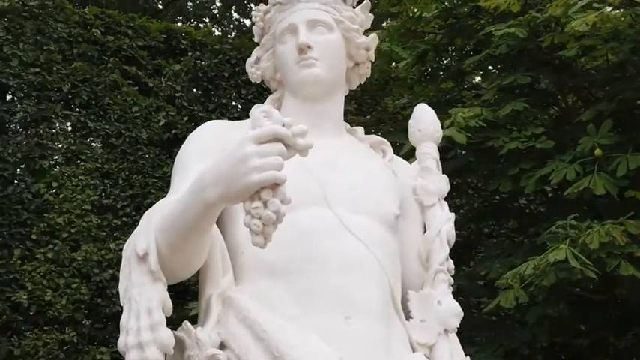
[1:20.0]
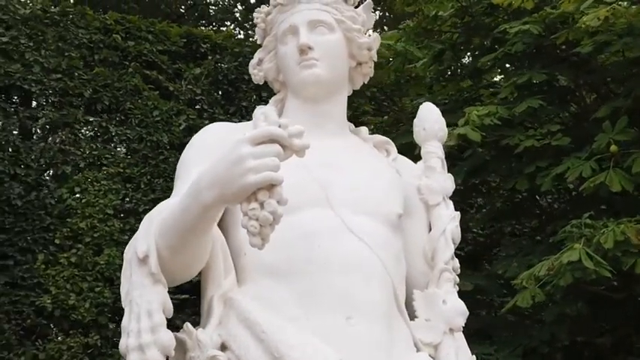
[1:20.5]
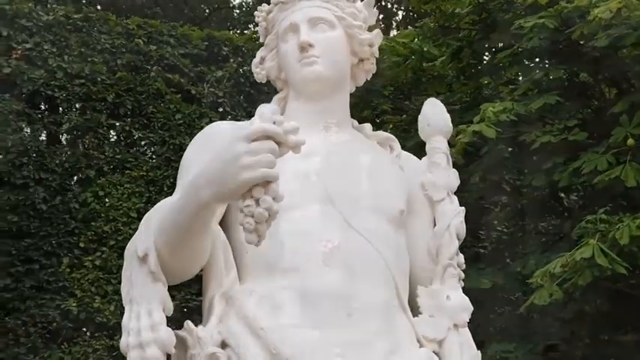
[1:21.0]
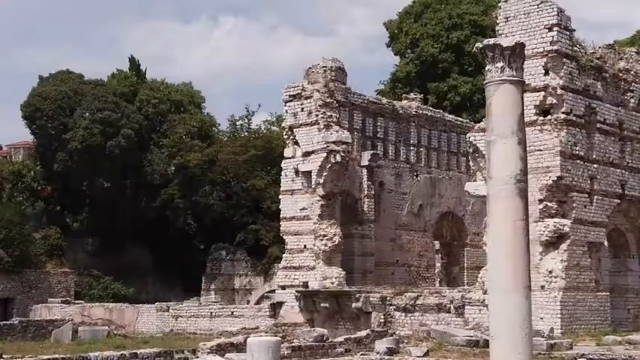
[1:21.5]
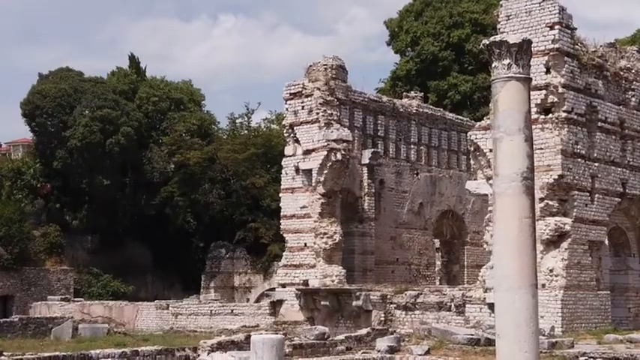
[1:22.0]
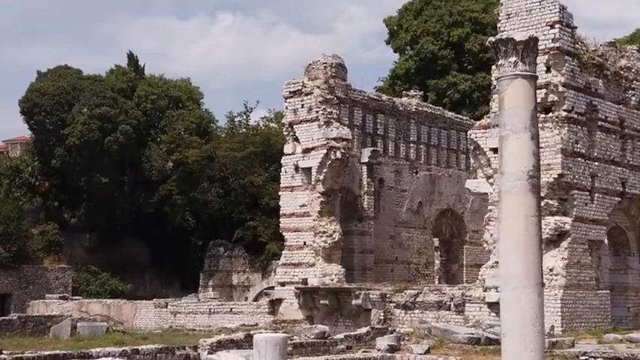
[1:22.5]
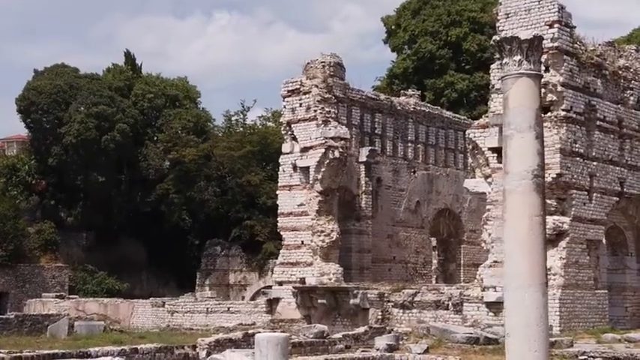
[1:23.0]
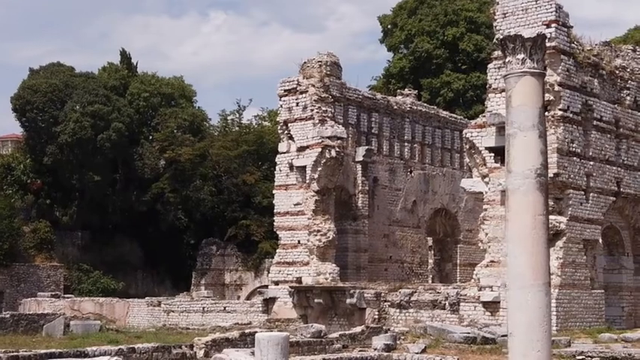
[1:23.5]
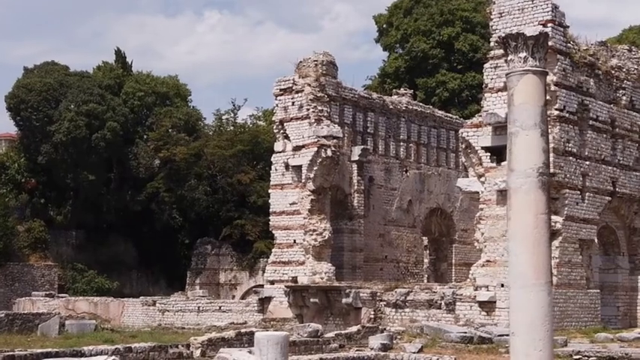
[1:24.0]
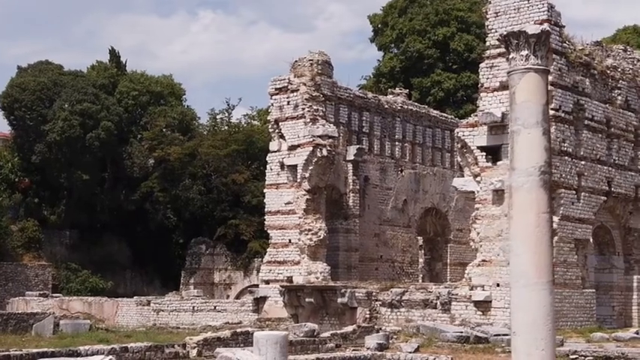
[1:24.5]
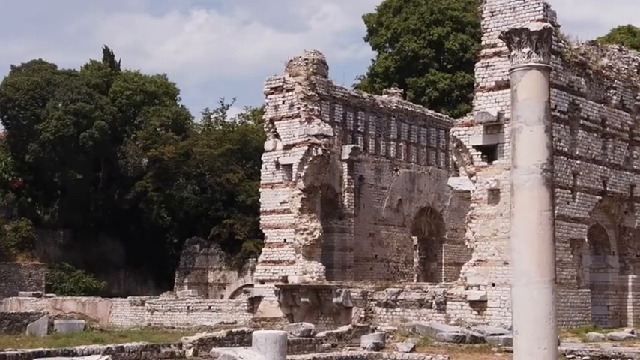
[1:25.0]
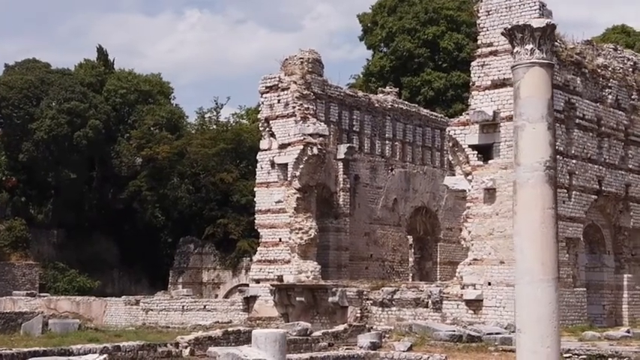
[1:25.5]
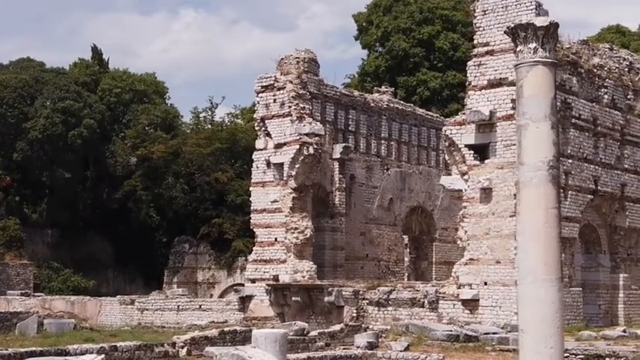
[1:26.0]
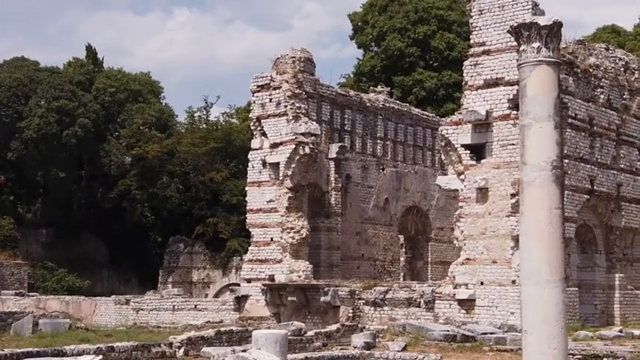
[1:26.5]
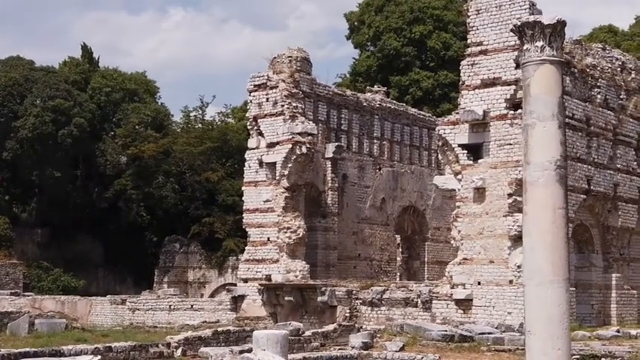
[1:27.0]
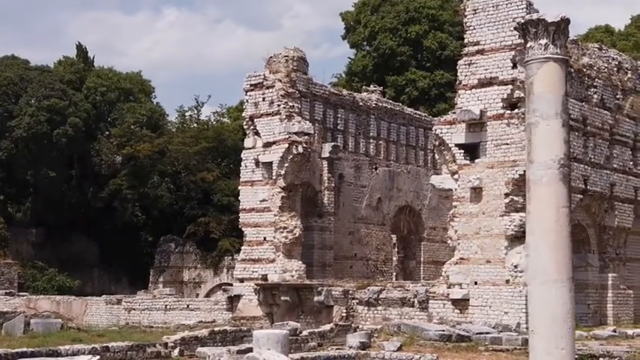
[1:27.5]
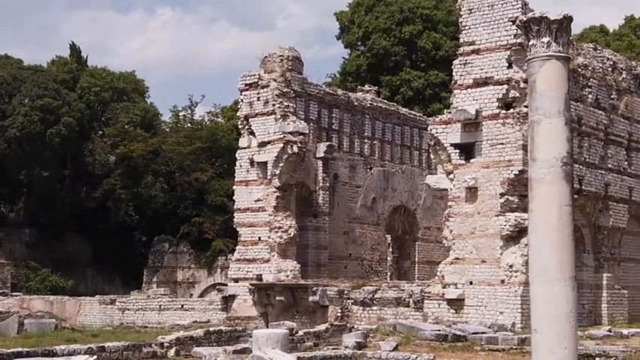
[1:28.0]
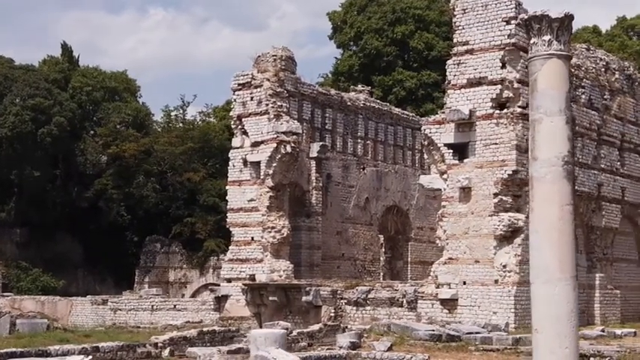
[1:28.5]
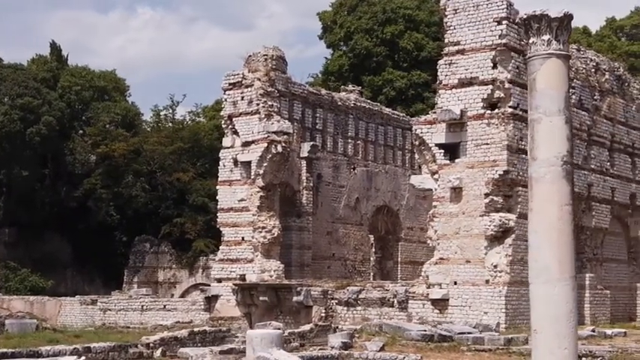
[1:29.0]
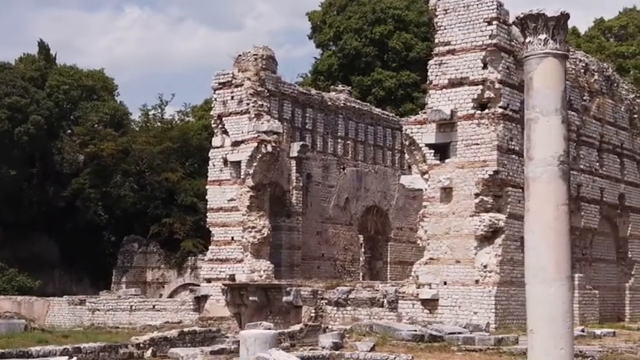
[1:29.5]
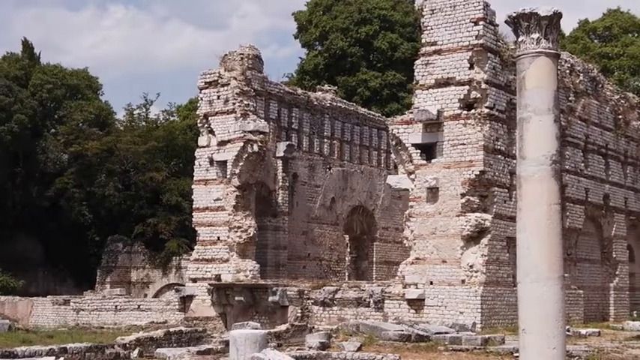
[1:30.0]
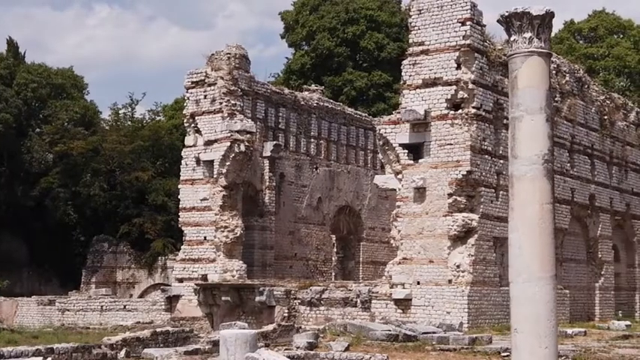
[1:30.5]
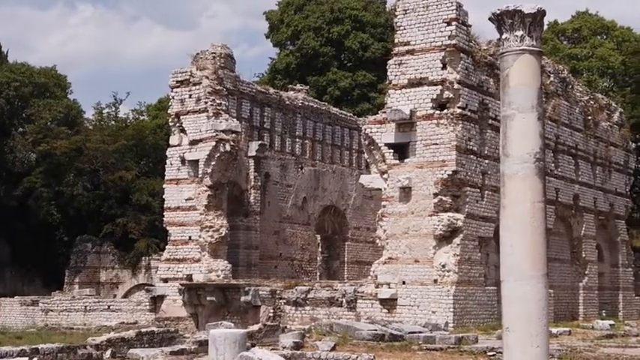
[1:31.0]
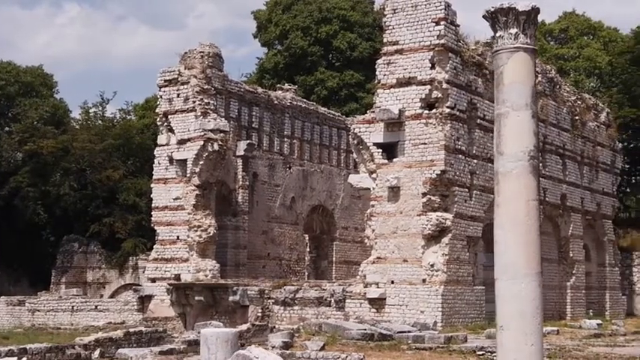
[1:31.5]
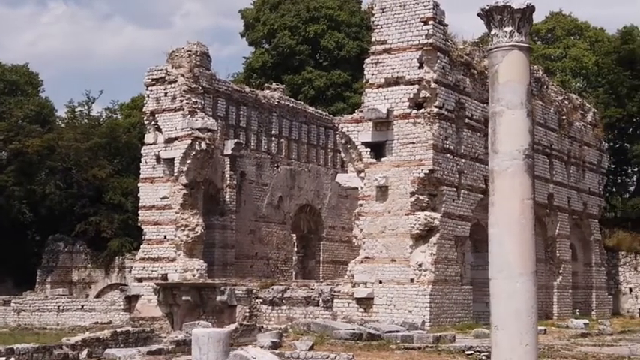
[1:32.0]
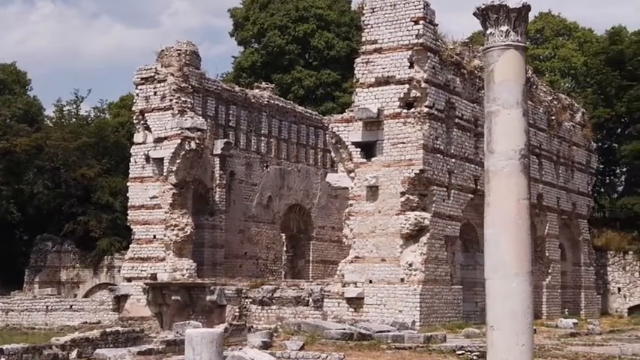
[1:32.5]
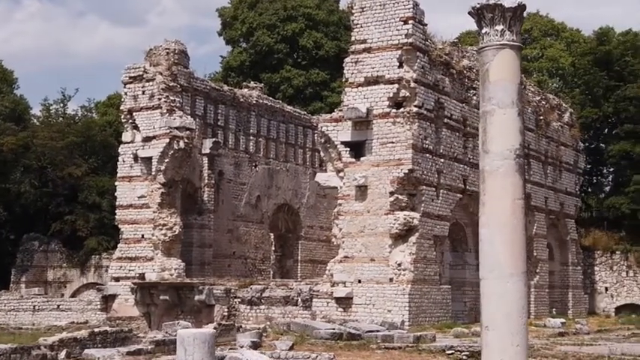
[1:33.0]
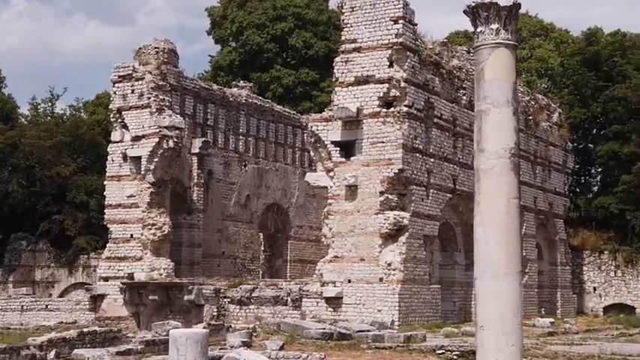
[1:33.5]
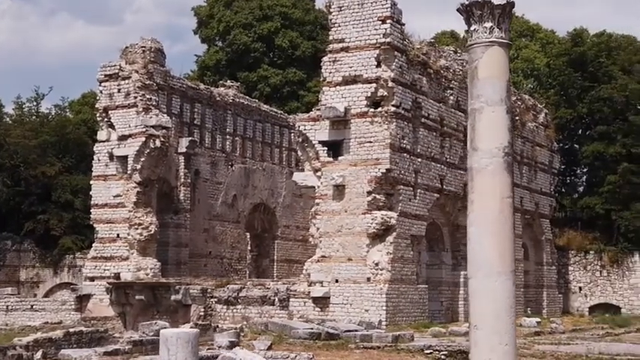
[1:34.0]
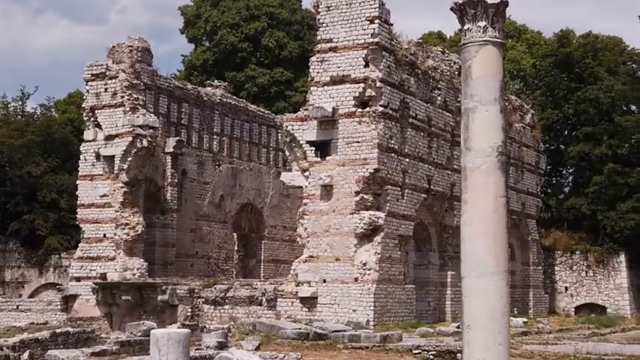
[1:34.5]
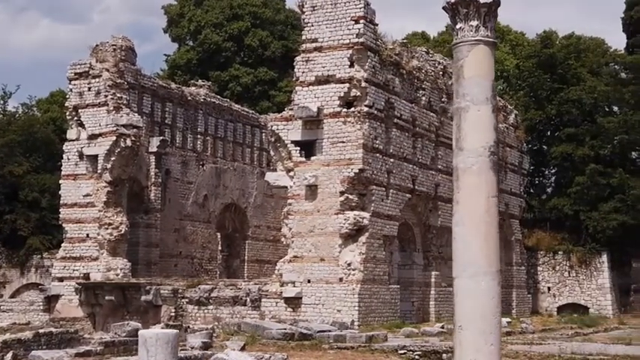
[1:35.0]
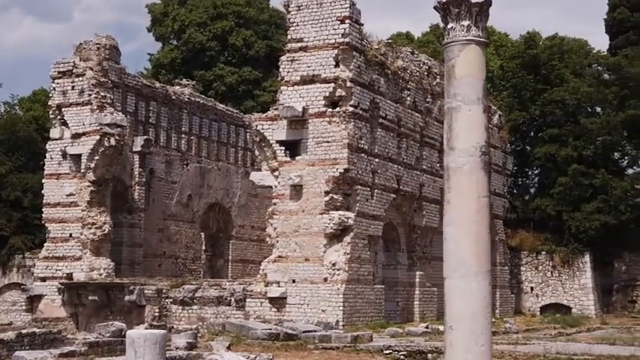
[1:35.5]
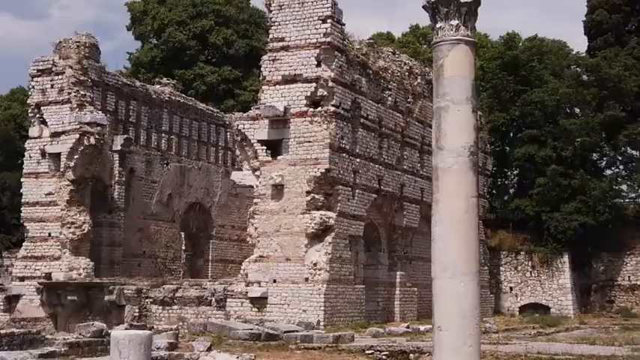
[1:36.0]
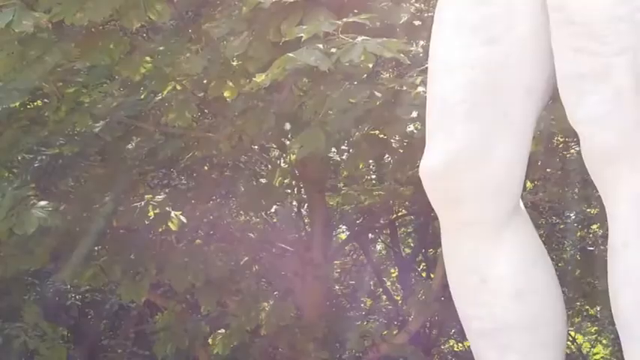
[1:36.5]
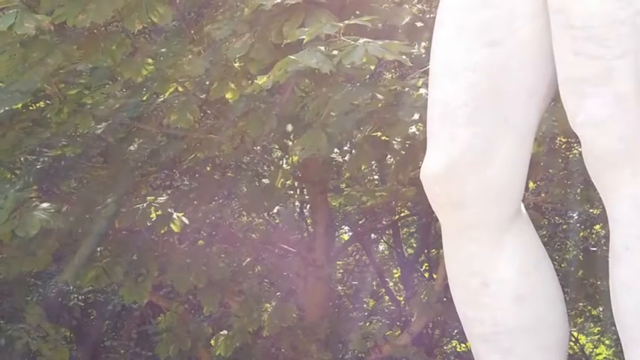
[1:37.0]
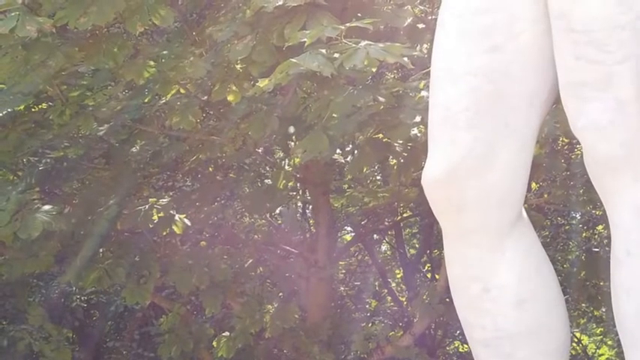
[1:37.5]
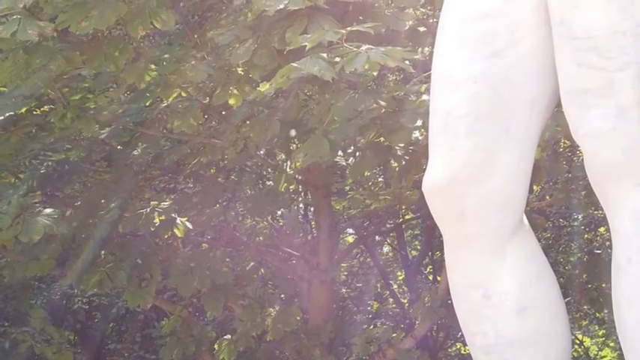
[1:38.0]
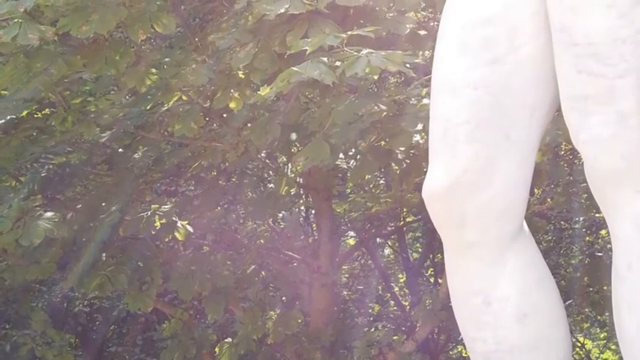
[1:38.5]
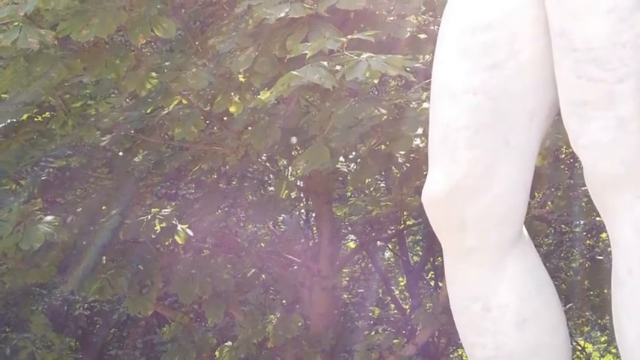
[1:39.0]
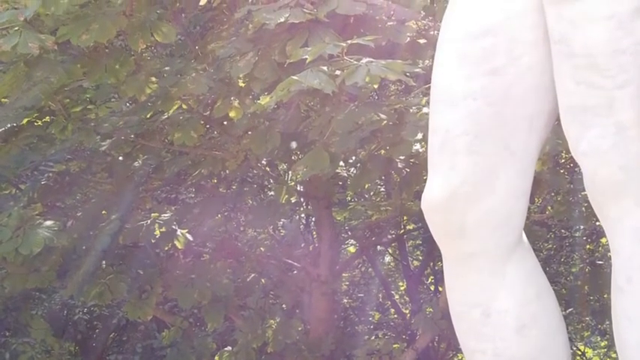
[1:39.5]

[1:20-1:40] A ruin of a former building made of bricks or brick-shaped rocks appears, with large archways and Corinthian columns; the rocks have bands of colour at different intervals. A rocky wall surrounded the building, but most of it is no longer standing and only parts remain, and none of the roof has survived. Lush green trees are behind it, and the site is reminiscent of the Roman Forum. The video then shows the legs of the Dionysus statue: parts of the thighs, the knees and the calf of the right leg, with sunbeams coming through the dappled light of the trees nearby. It then flicks back to the ruins of the big building, where a freestanding Corinthian column is in front of the large building with several archways; what remains are two walls and these archways.